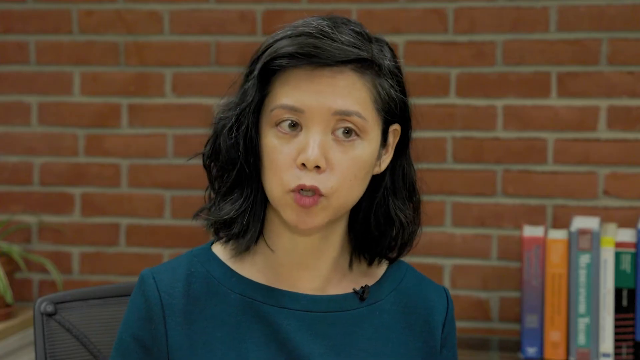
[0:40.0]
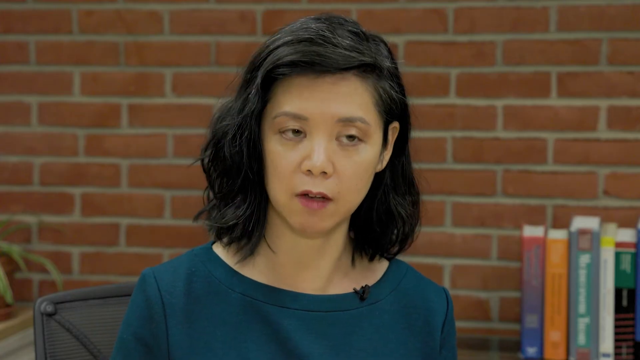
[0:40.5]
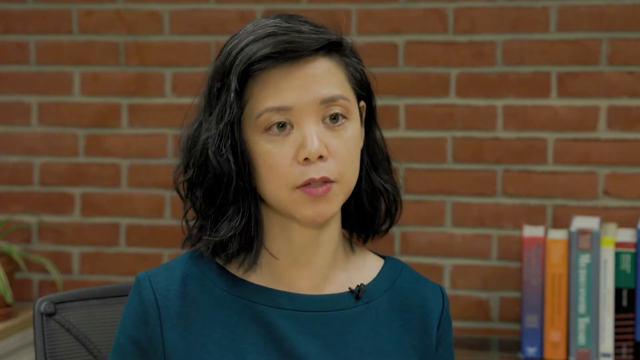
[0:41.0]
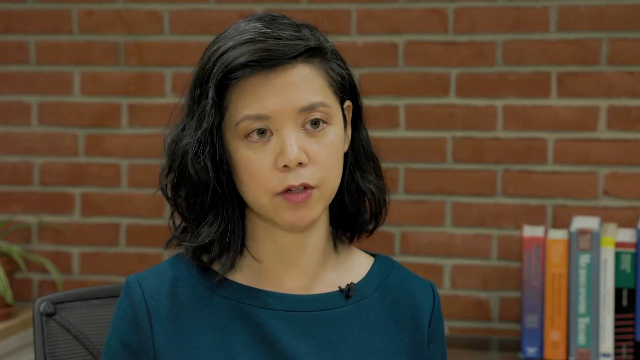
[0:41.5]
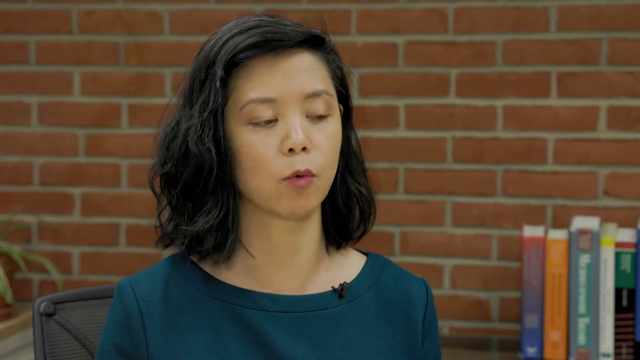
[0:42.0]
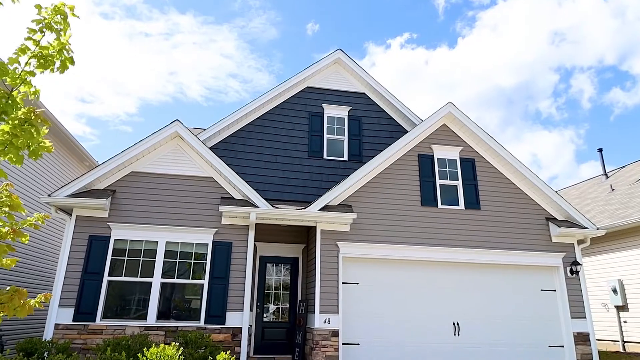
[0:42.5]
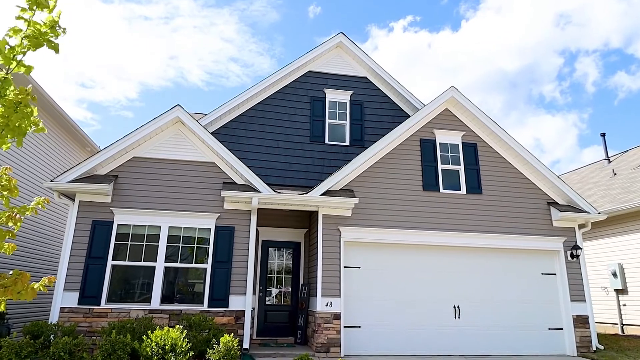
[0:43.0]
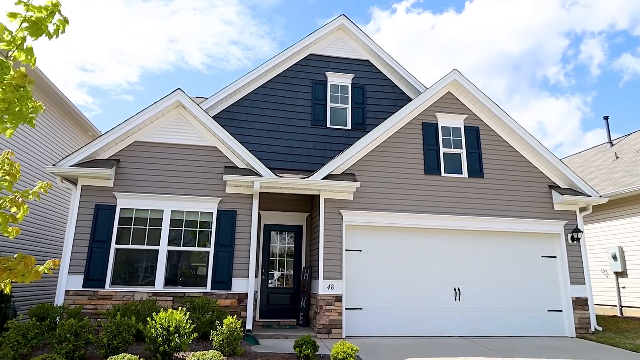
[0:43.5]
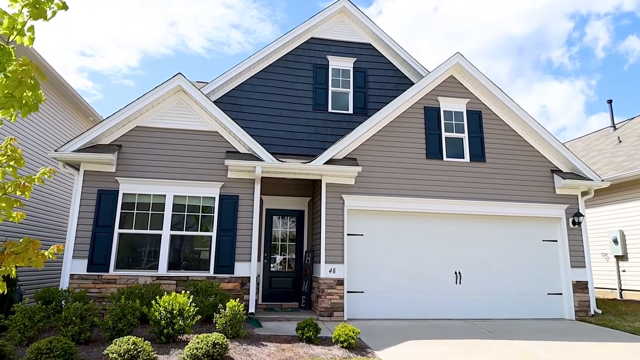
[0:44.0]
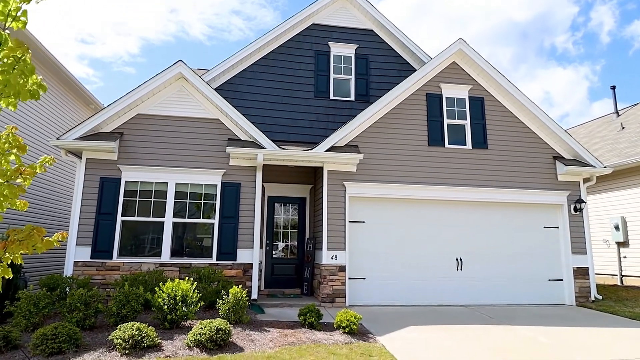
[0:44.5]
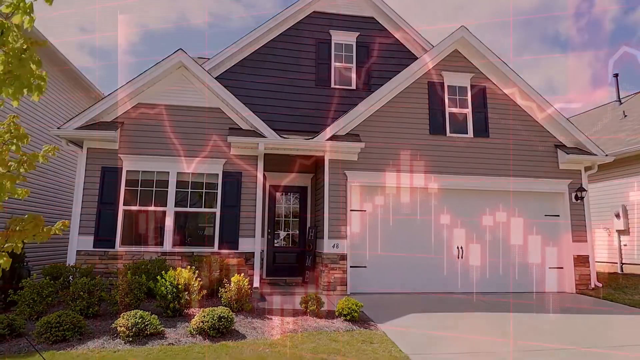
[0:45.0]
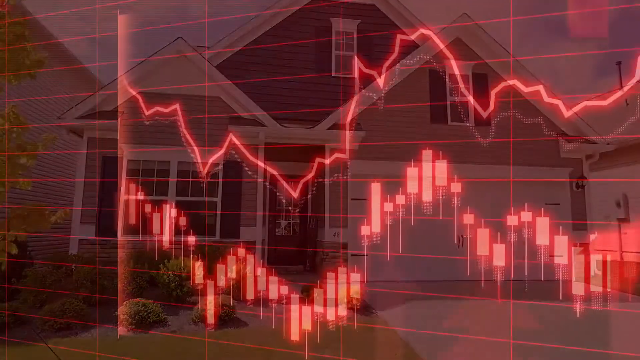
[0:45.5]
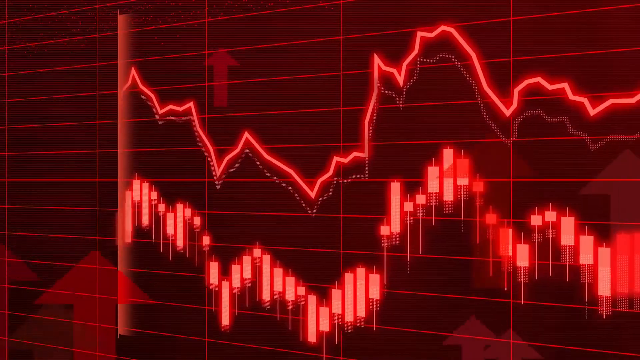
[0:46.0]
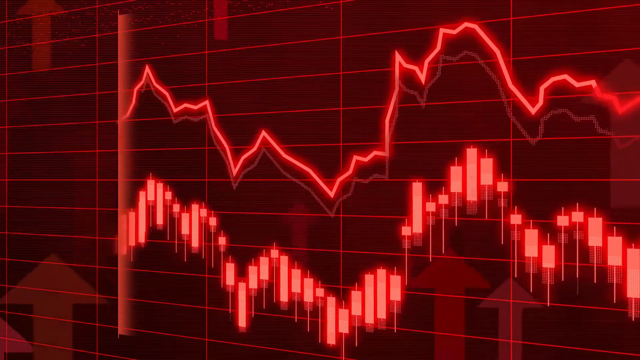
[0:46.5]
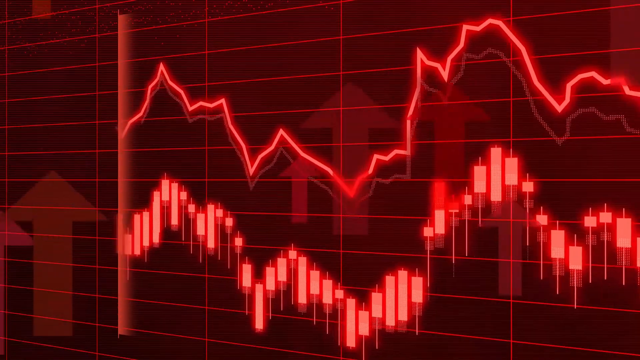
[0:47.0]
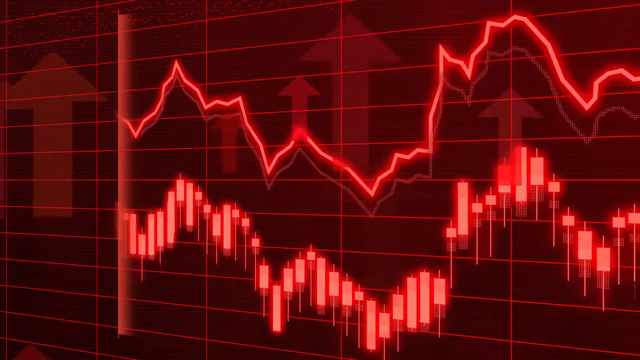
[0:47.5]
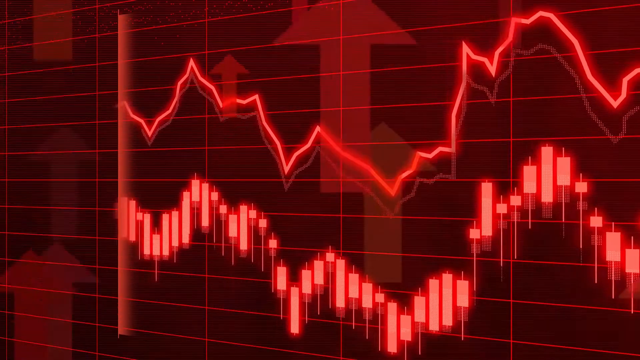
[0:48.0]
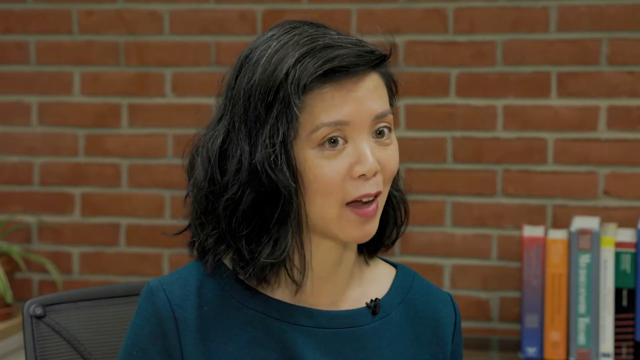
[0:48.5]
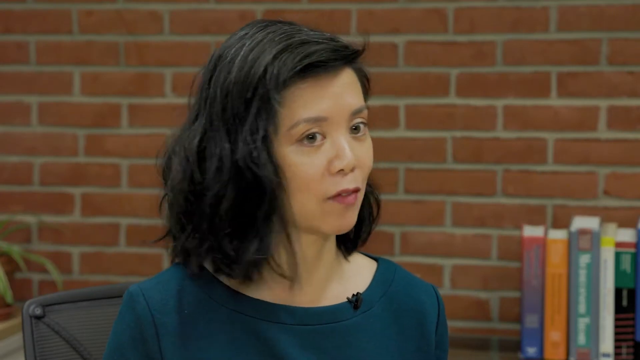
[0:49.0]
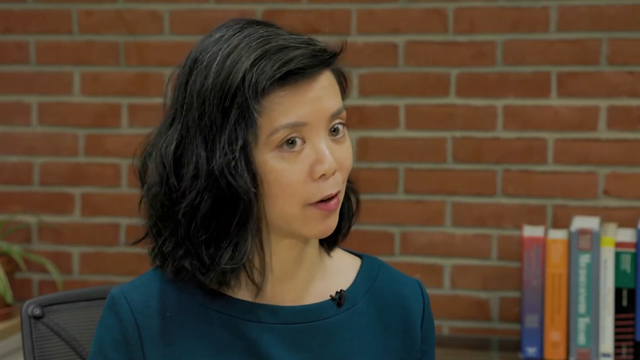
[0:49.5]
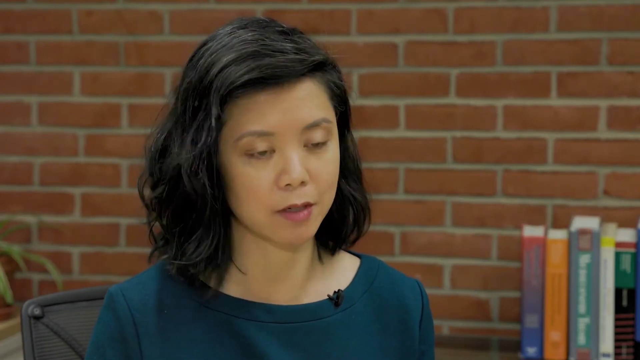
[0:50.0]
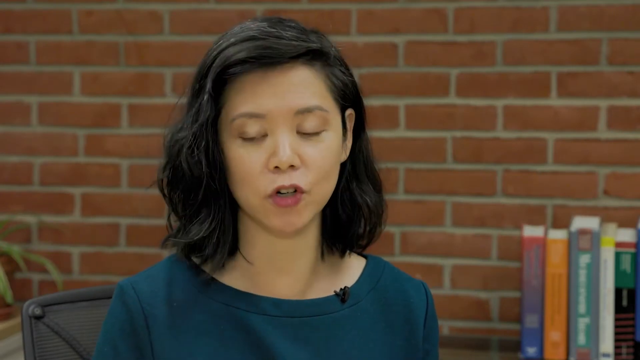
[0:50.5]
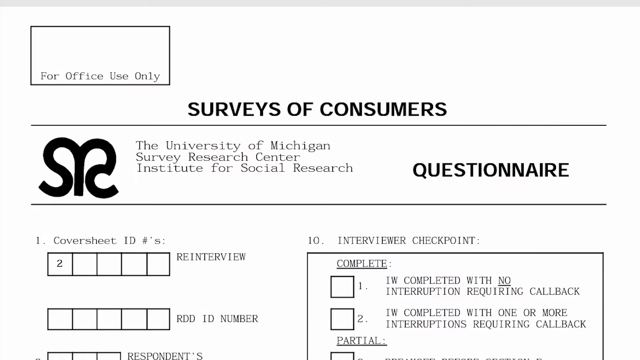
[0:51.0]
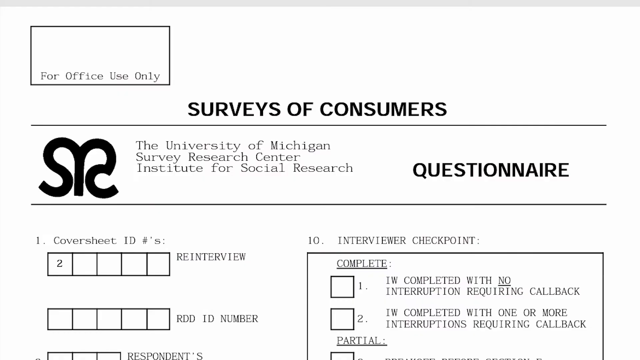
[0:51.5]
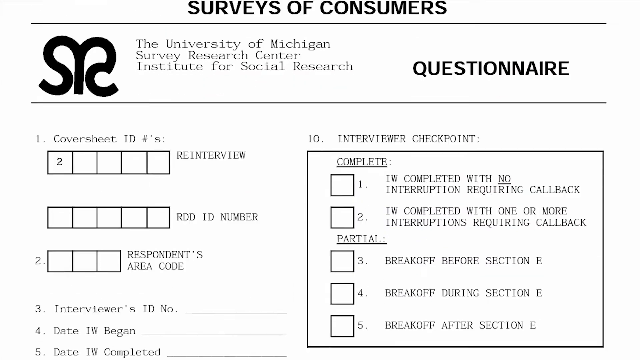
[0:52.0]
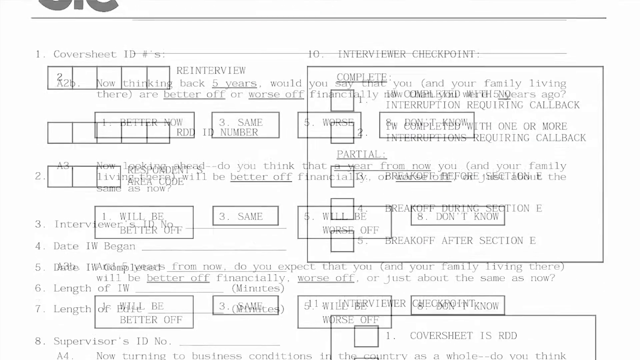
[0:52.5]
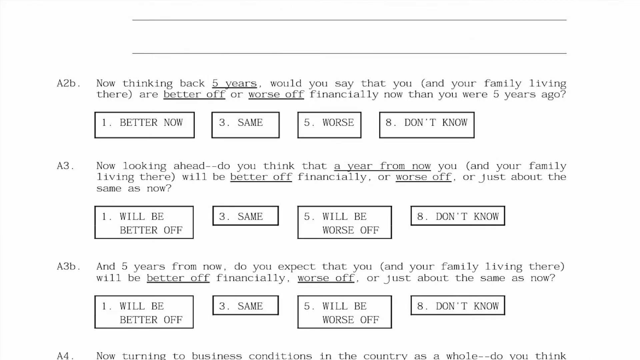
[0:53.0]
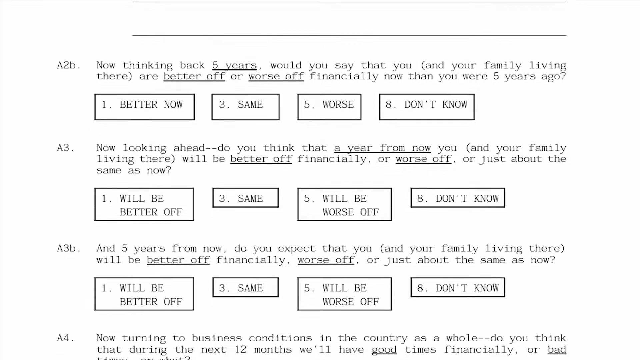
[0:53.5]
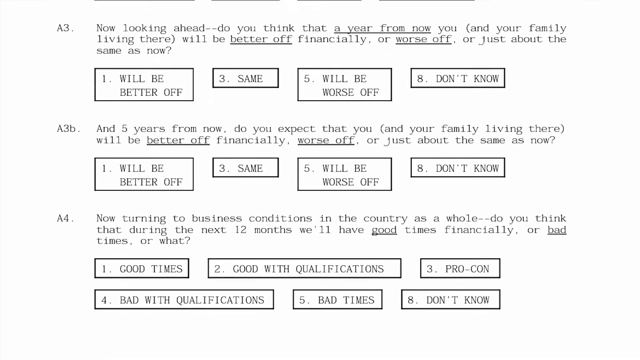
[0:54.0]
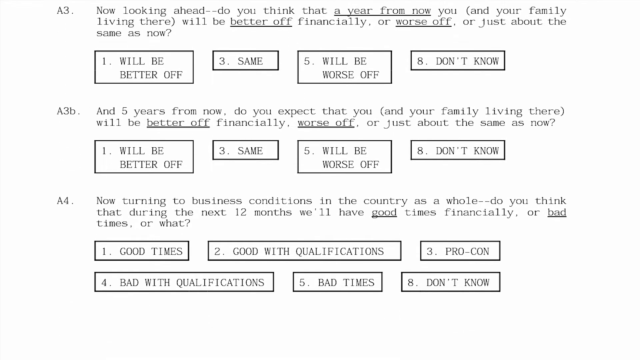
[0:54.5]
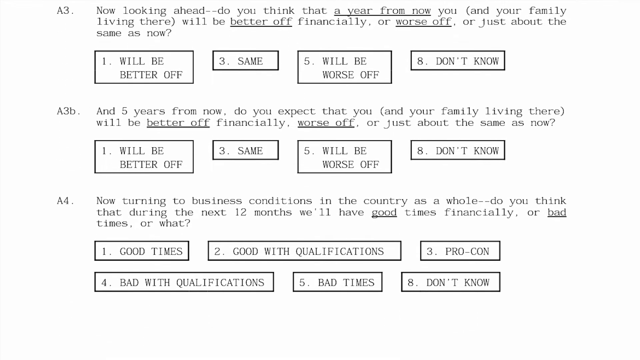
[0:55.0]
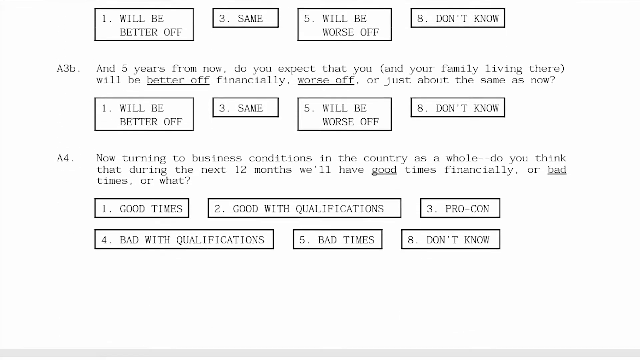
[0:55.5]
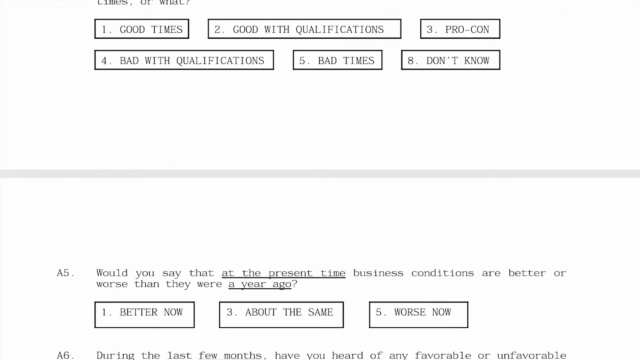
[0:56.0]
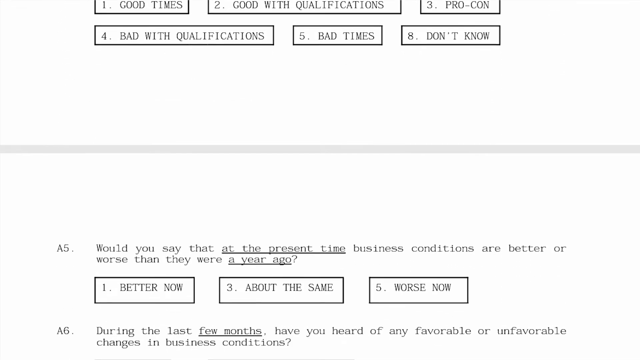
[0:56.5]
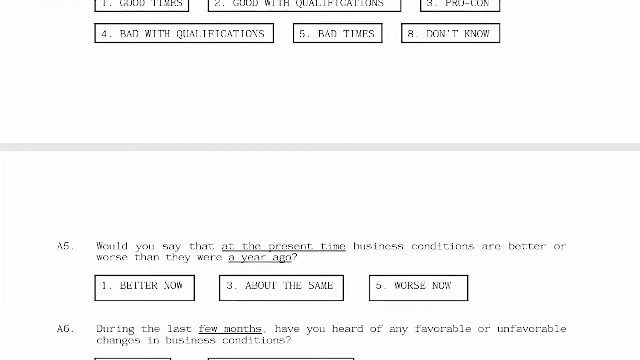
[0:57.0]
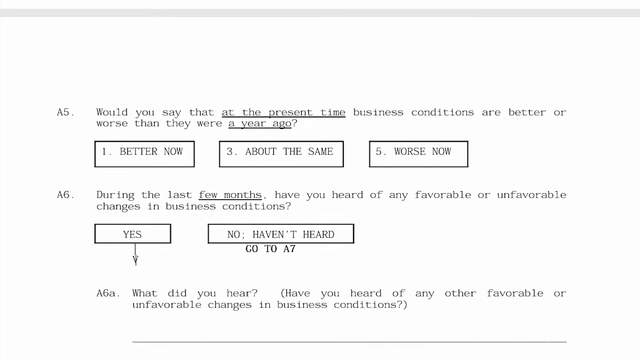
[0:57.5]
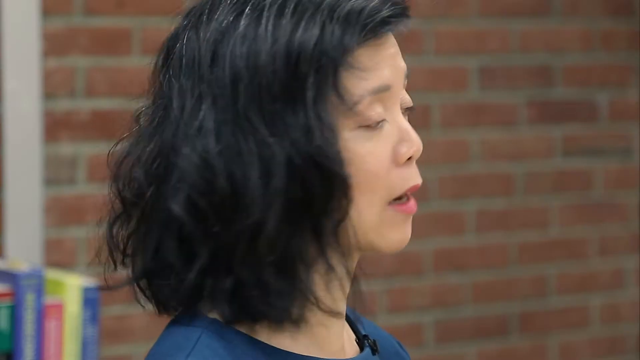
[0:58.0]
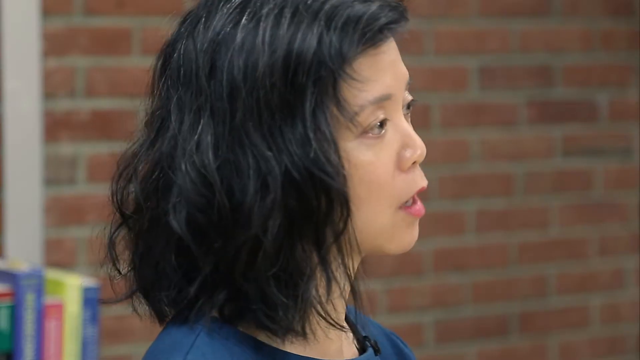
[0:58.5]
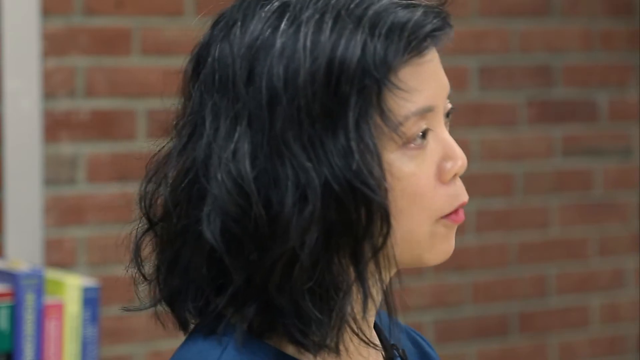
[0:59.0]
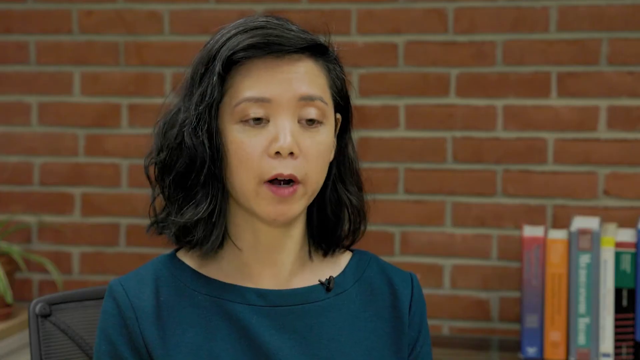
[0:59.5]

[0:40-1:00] A gray house with white window sills and blue window covers appears, with a tree on the left-hand side and a blue, cloudy sky above. Next is a graph on a black background, drawn entirely in red; the line goes up and down unsteadily, and arrows point upward. The video returns to Professor Joanne Hsu, who is talking. Then another page scrolls up, showing a consumer report with a question reading "A2B now thinking back five years, would you say that you and your family living there are better off or worse off financially now than you were five years ago," followed by answer options that seem to be better now, same, worse, or don't know.